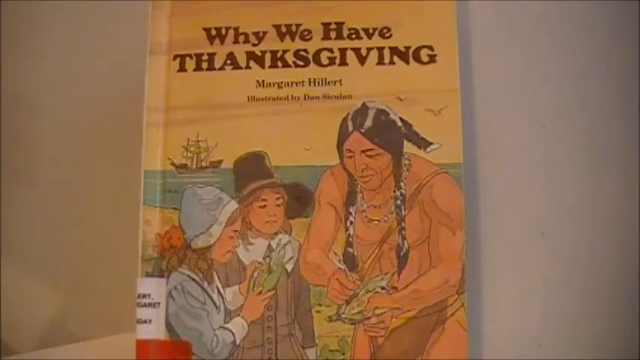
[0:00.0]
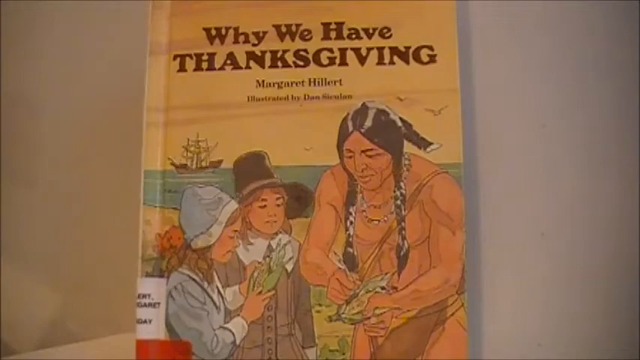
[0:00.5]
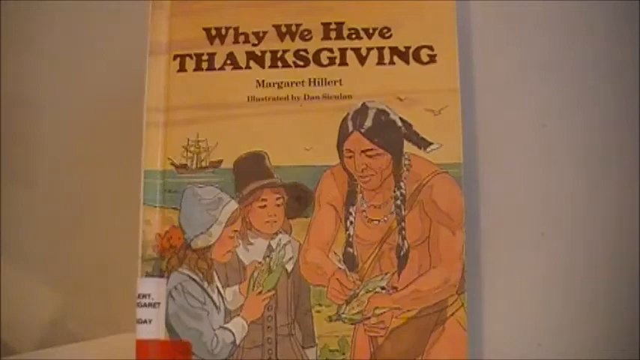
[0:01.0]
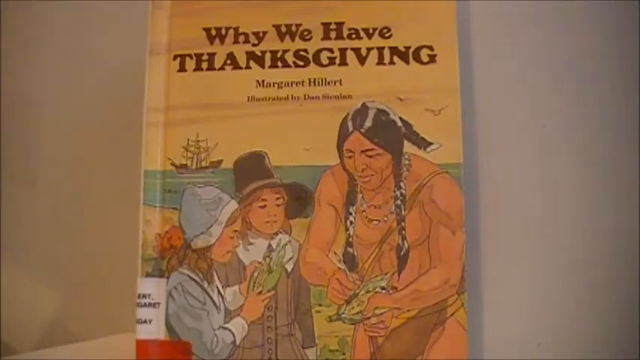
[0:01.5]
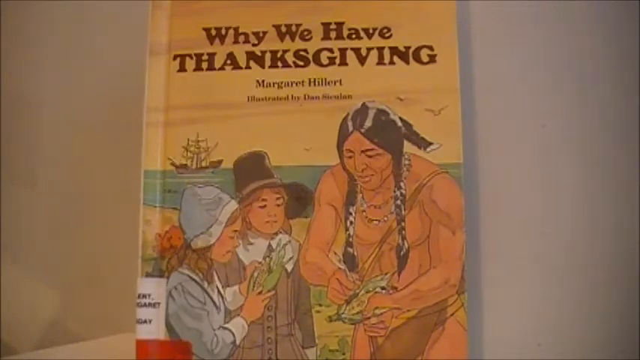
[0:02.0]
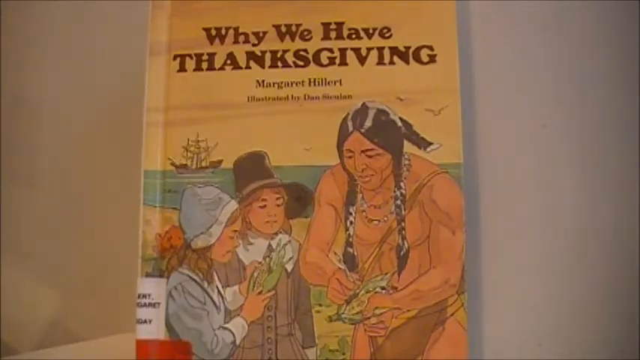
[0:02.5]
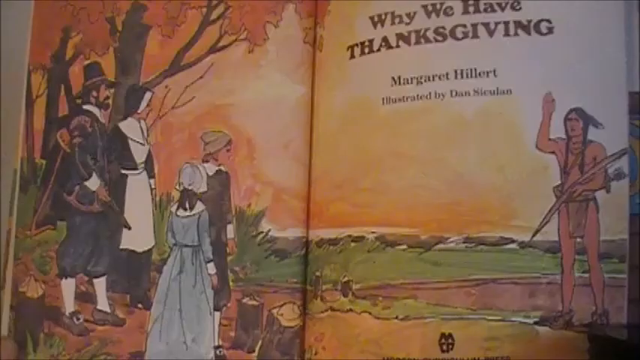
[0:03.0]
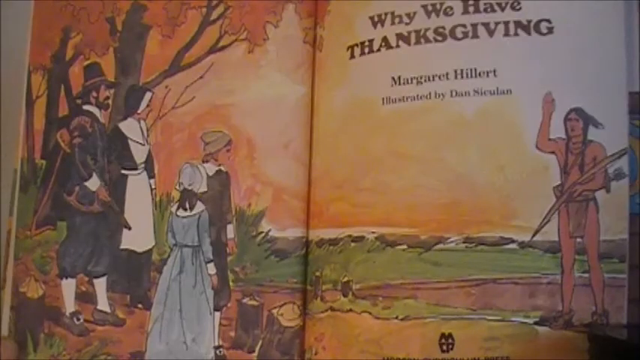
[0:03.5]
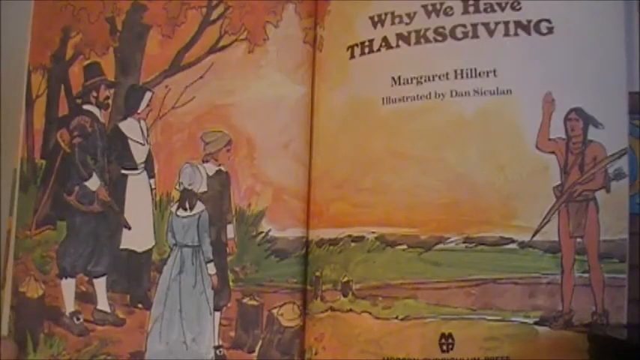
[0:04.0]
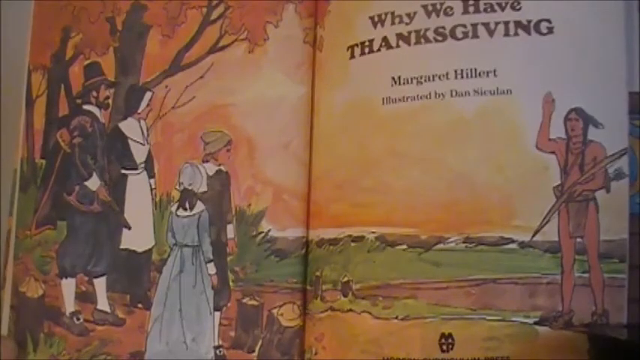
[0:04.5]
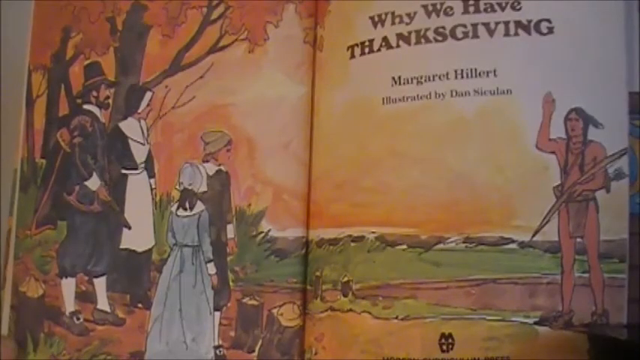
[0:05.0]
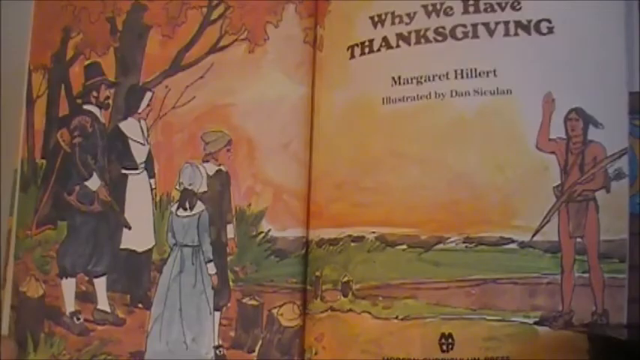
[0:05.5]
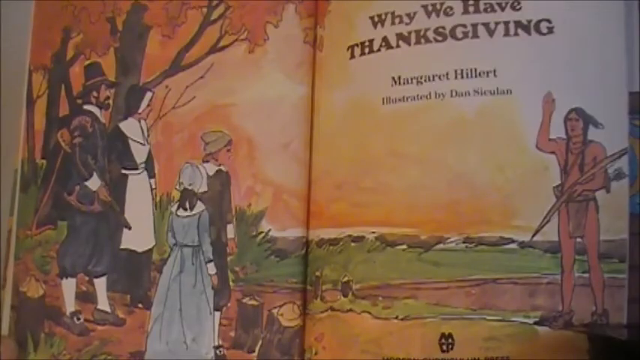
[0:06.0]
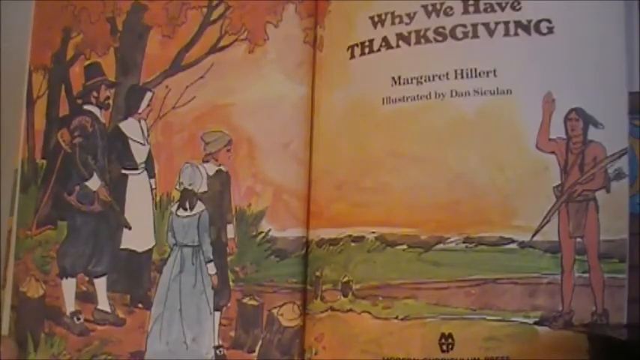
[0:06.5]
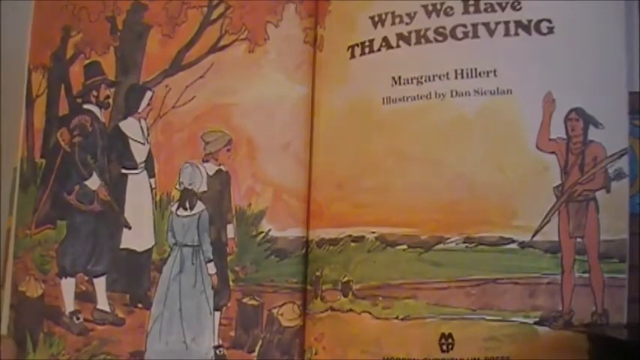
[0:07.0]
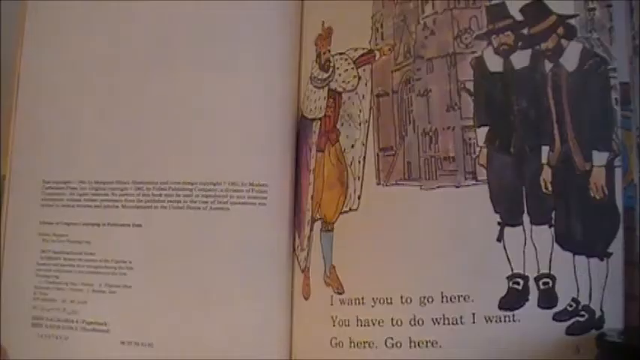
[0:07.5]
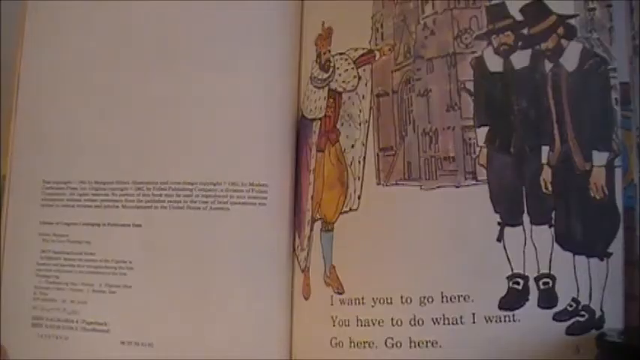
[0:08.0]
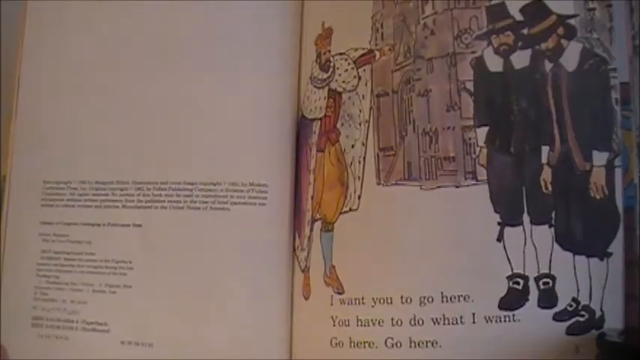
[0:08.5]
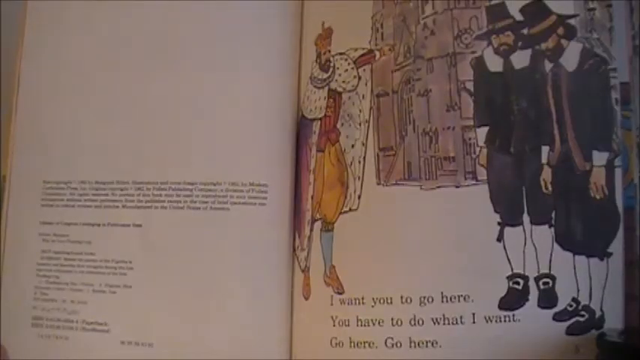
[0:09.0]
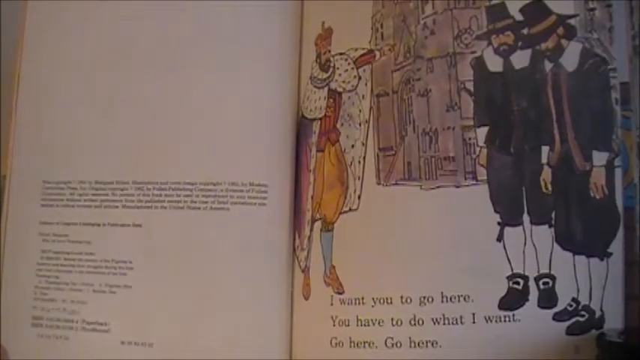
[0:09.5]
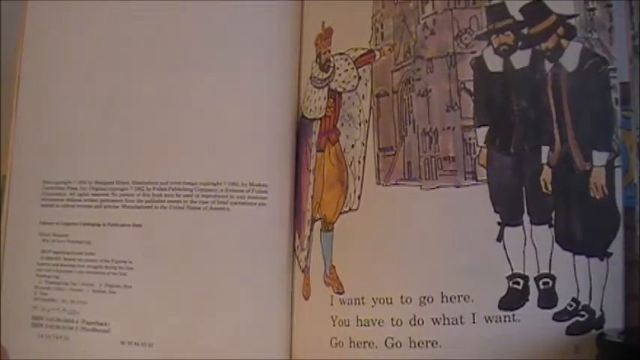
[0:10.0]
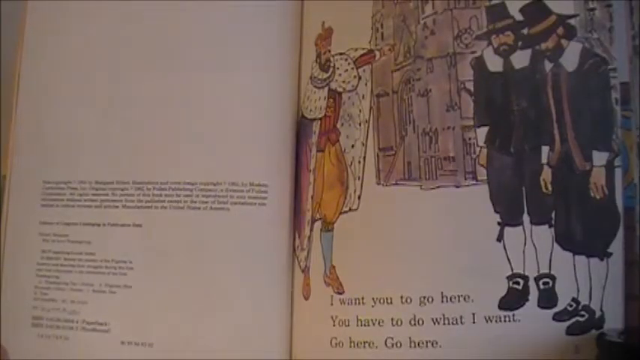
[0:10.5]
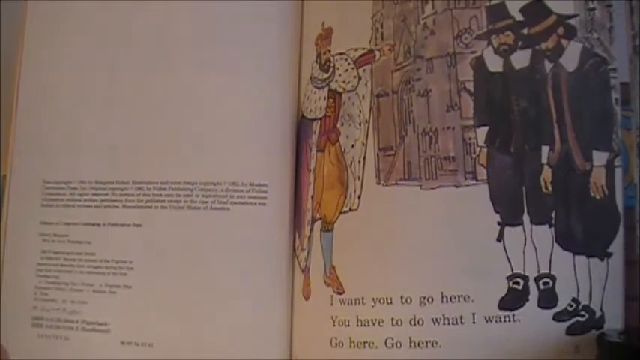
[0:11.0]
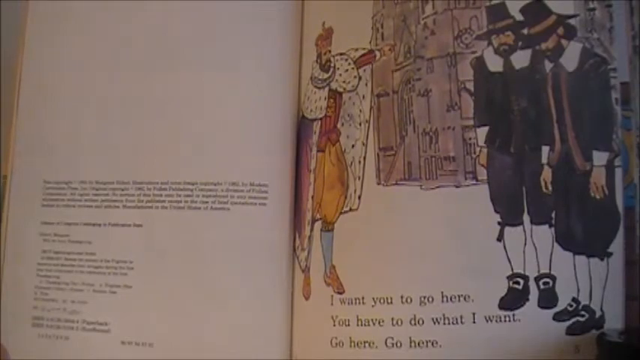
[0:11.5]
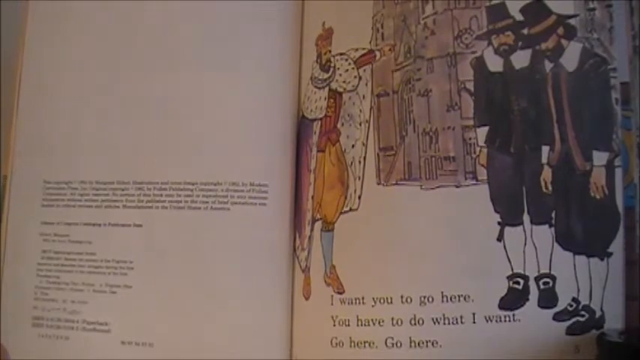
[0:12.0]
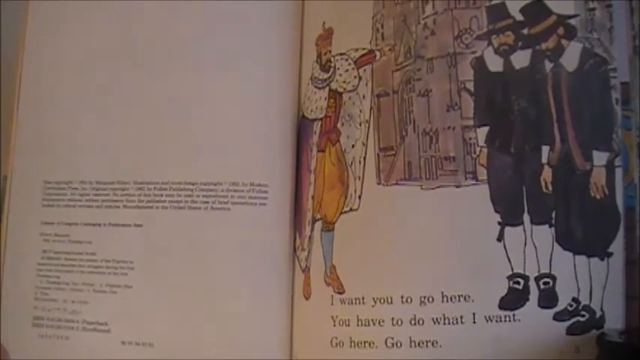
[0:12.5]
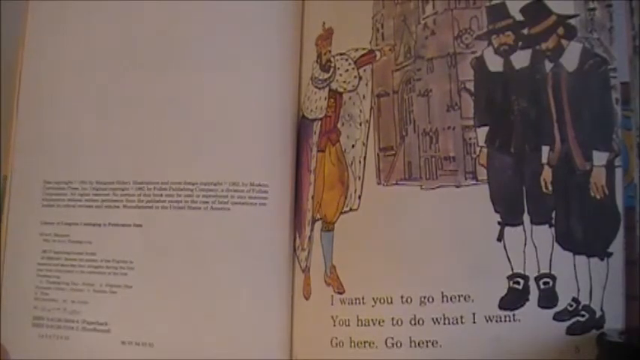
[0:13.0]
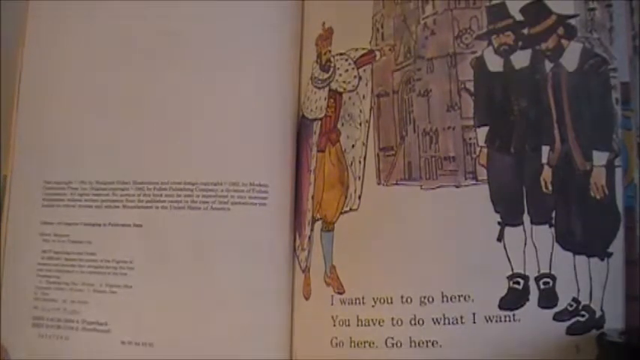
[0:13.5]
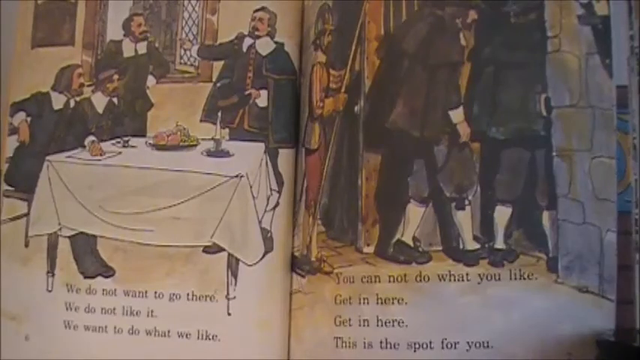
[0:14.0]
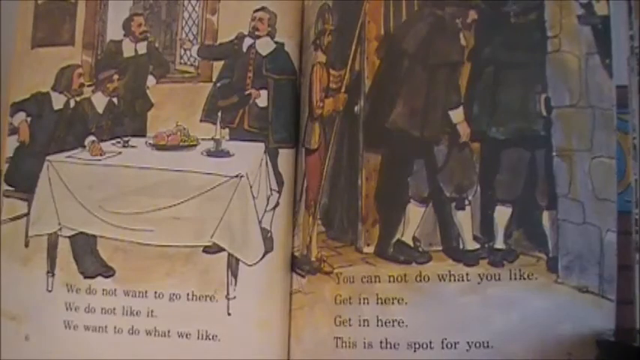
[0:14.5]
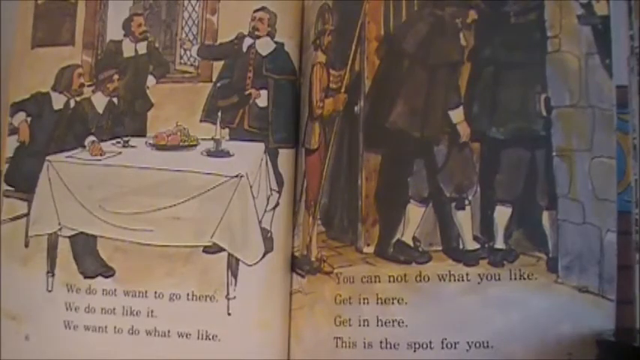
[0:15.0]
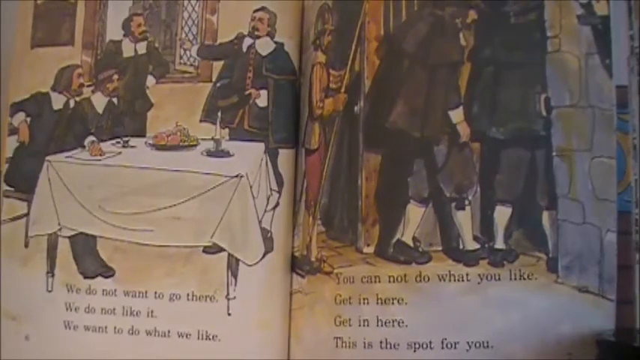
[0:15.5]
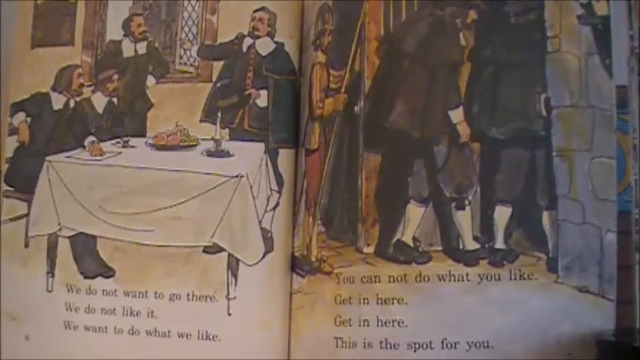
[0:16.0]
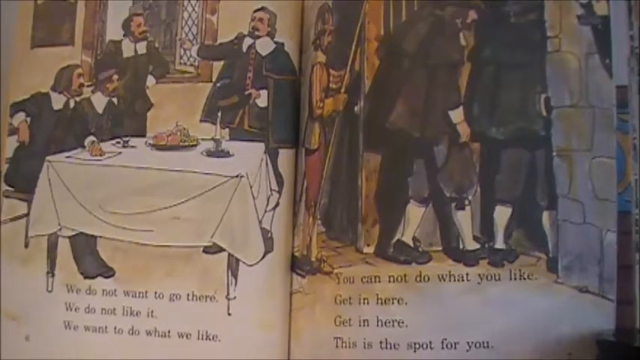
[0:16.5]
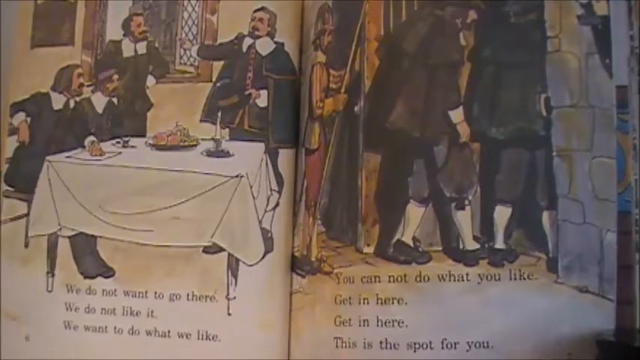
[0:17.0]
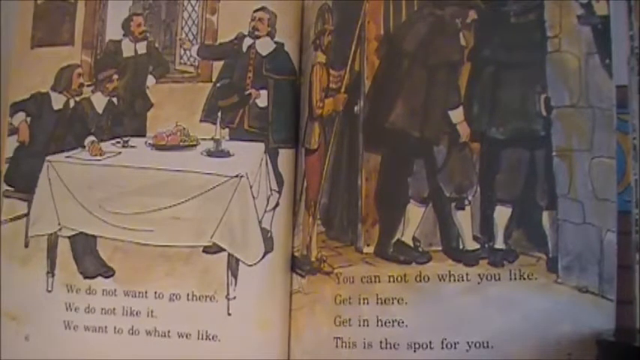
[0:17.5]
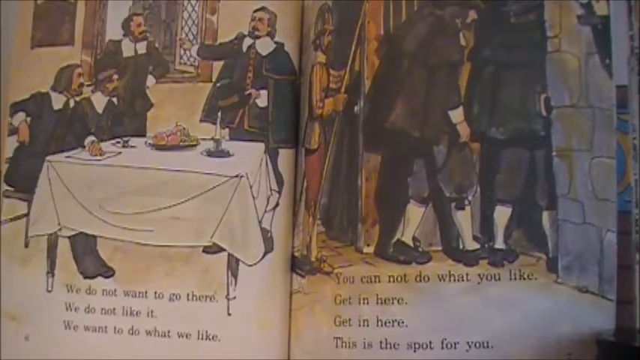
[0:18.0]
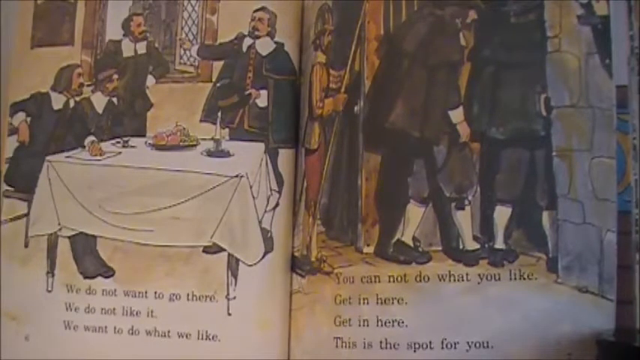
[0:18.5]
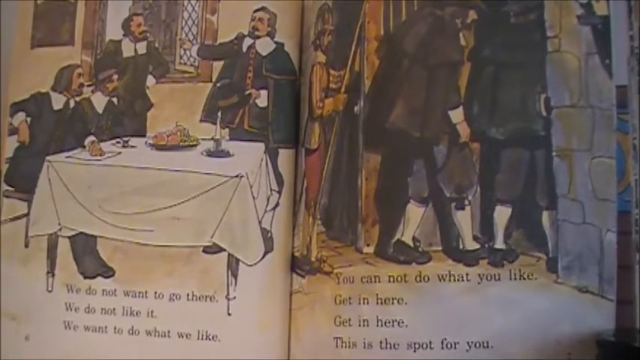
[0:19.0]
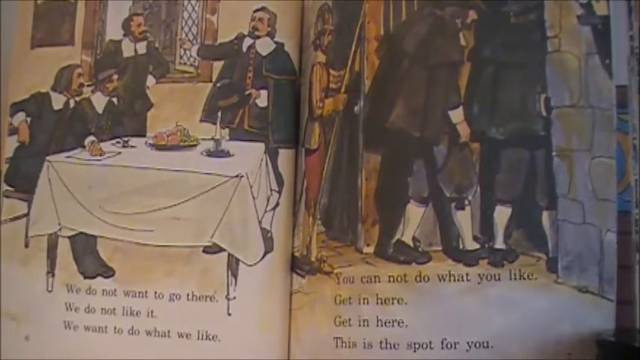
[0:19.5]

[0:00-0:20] The video opens on the front cover of a book titled Why We Have Thanksgiving. The author appears to be Margaret Hillett, with illustrations by Dan Scanlon, though this is hard to make out. The cover shows a fairly stereotypical American Indian First Nation man with two long braids and feathers in his hair. He is shirtless and is showing what looks like a corn husk to two pilgrim children: a boy wearing the typical pilgrim hat and a girl in blue with a blue bonnet. They seem to be on a beach, with a ship in the background. It looks like a library book, since there is a small white tag at the bottom of the spine. The book then opens so it can be seen a little better, and the pages flick to the first page inside, a modified version of the cover showing the same Indian man and a pilgrim family: the girl with the blue bonnet, another boy, this time wearing a green cap, and a mother and father, all in fairly stereotypical settler pilgrim attire.